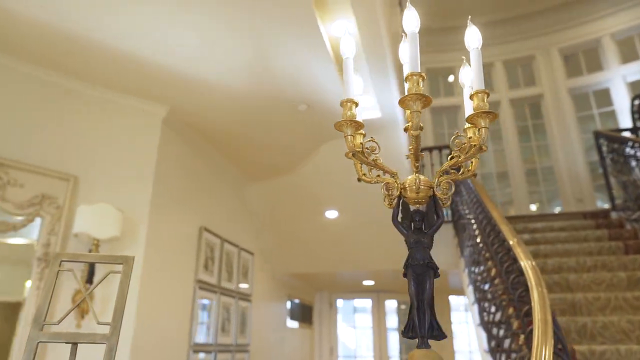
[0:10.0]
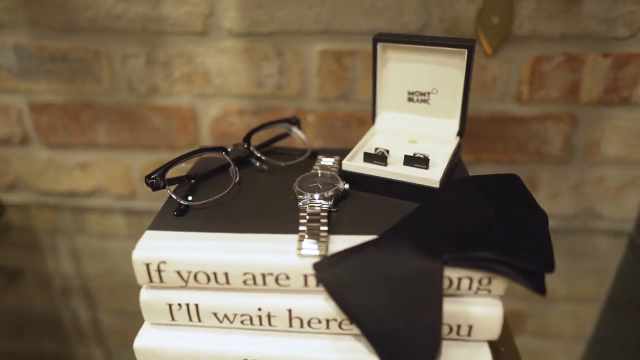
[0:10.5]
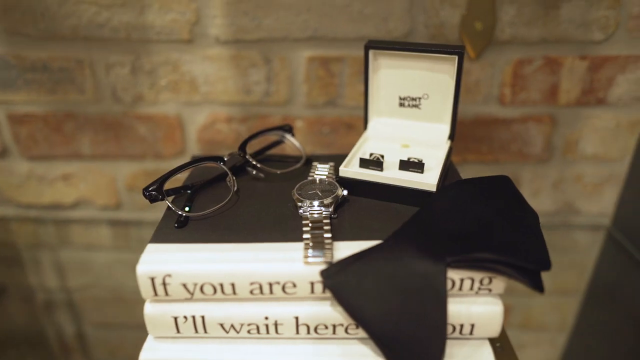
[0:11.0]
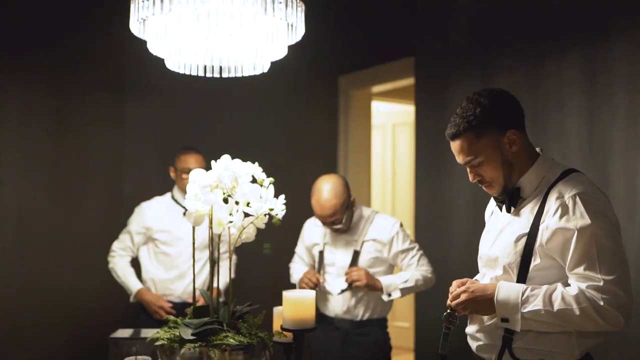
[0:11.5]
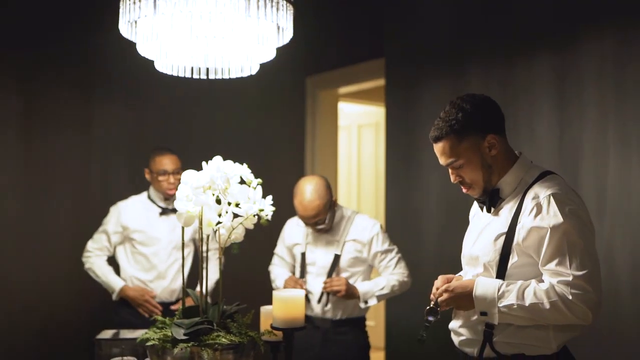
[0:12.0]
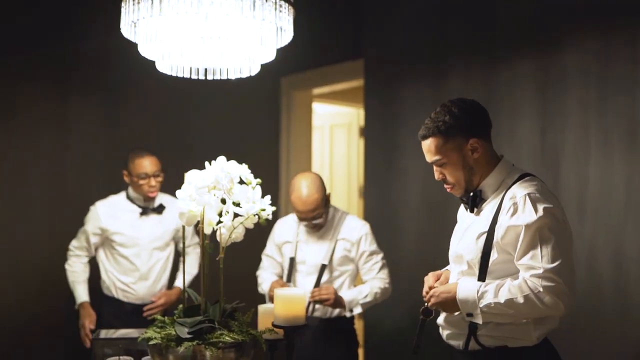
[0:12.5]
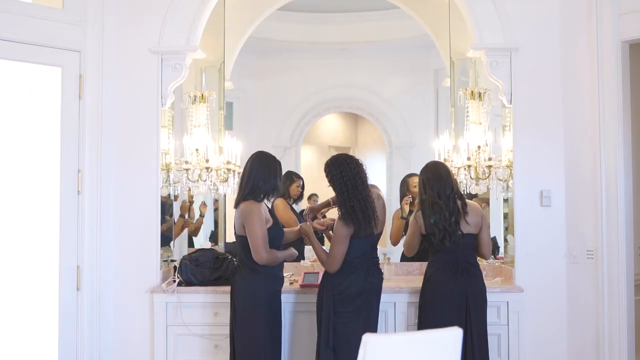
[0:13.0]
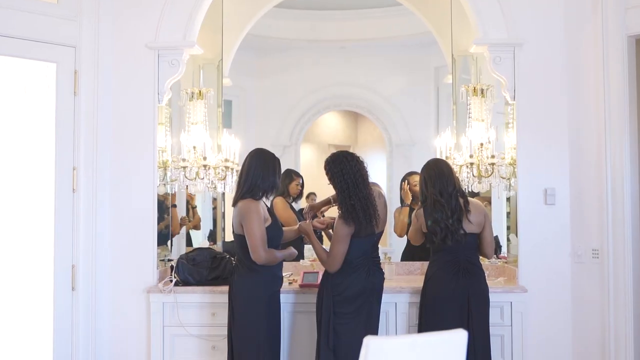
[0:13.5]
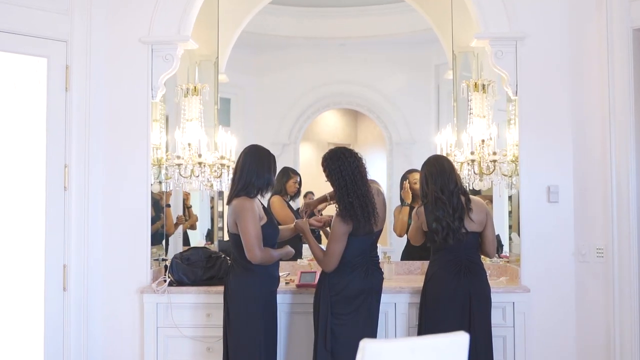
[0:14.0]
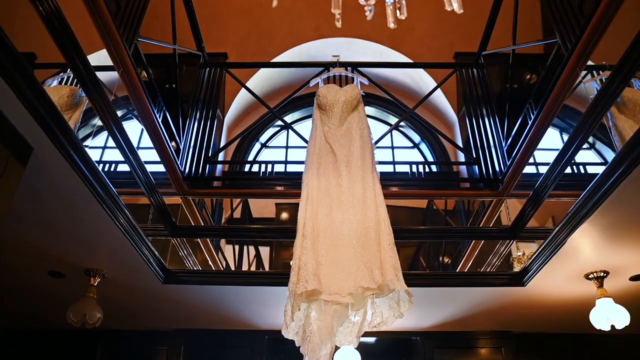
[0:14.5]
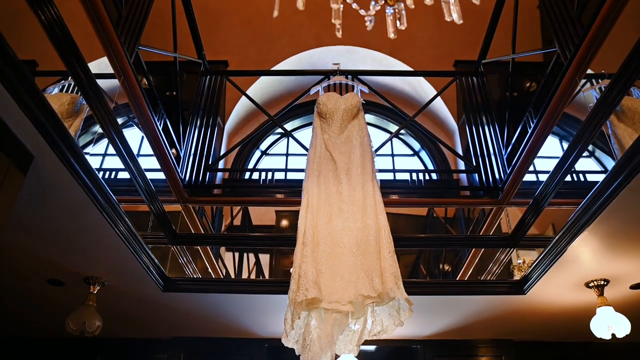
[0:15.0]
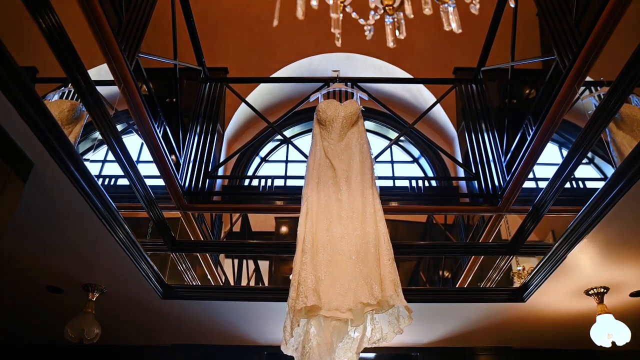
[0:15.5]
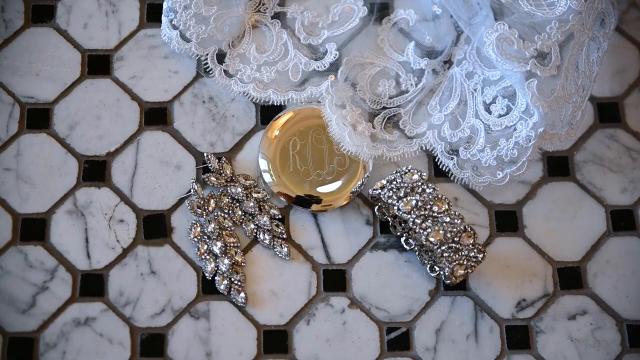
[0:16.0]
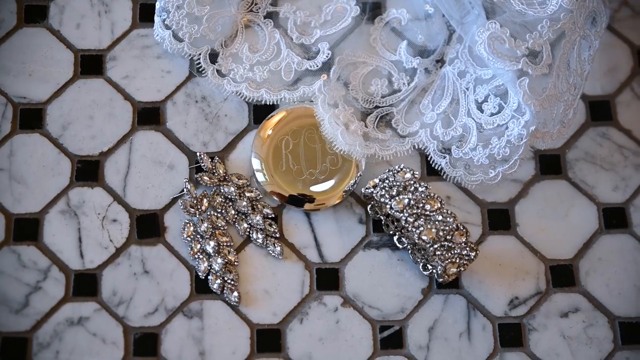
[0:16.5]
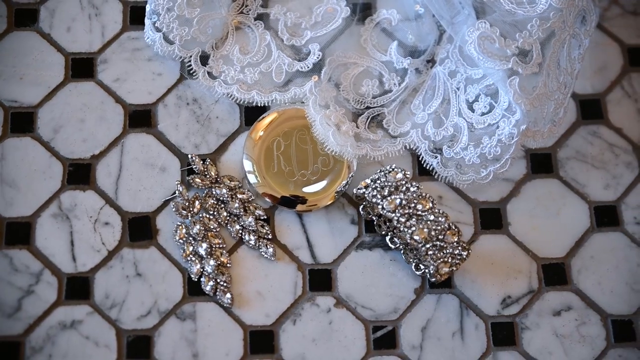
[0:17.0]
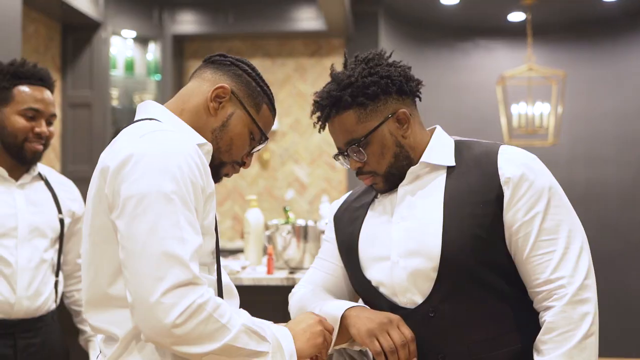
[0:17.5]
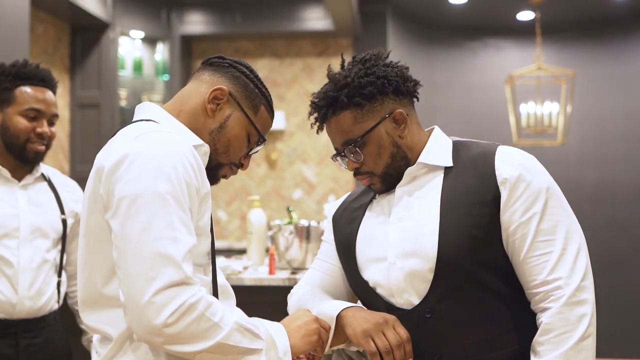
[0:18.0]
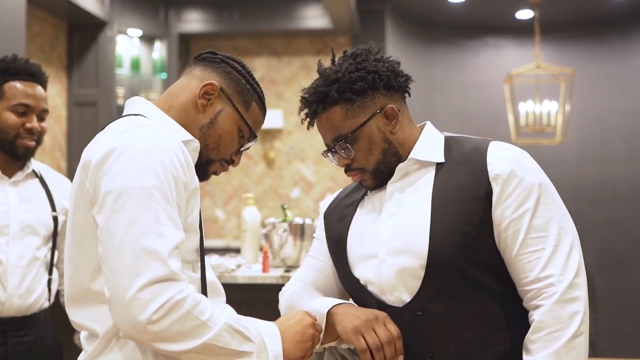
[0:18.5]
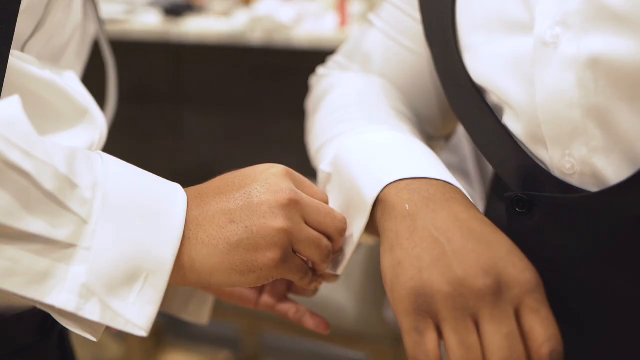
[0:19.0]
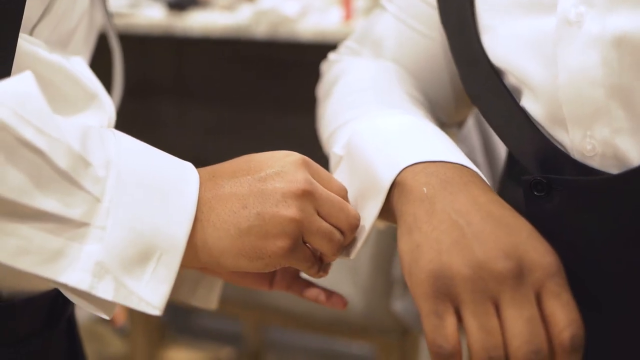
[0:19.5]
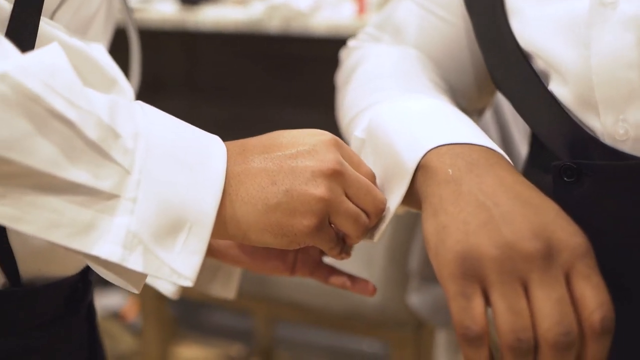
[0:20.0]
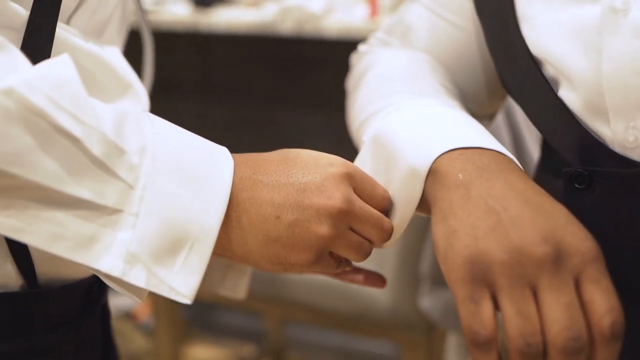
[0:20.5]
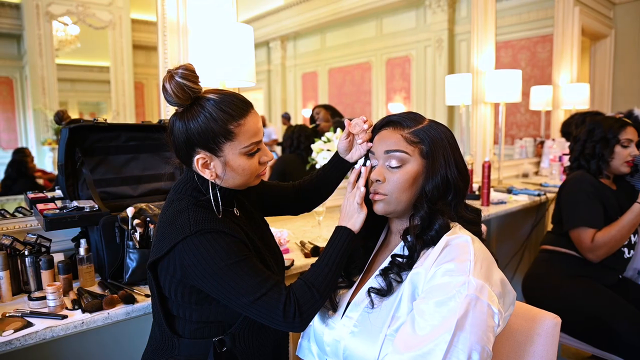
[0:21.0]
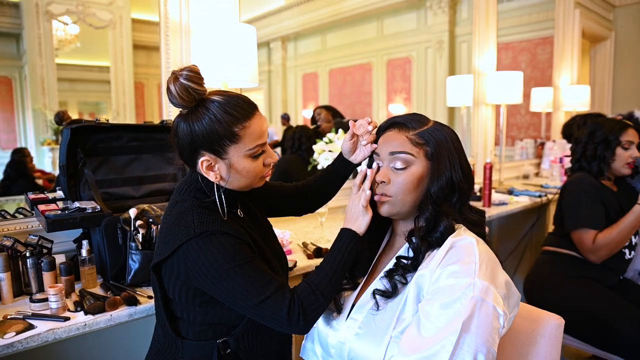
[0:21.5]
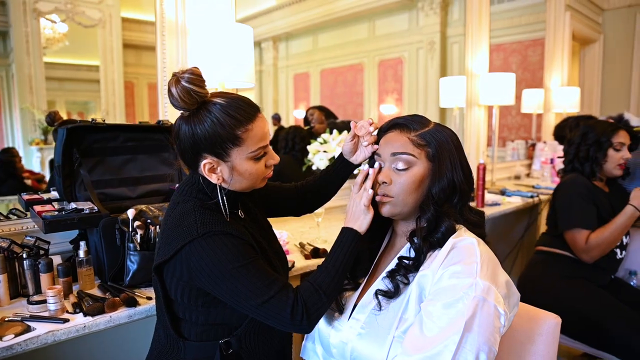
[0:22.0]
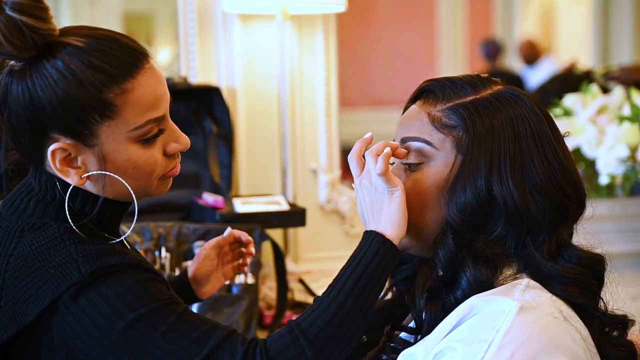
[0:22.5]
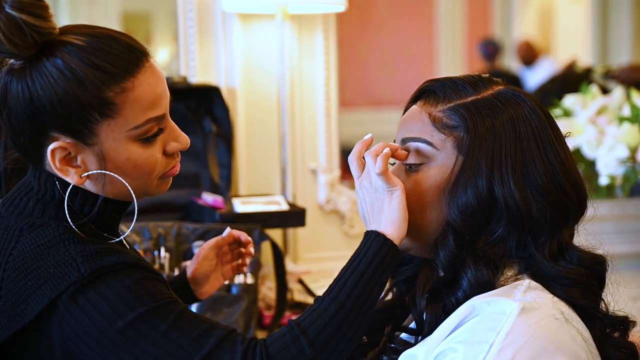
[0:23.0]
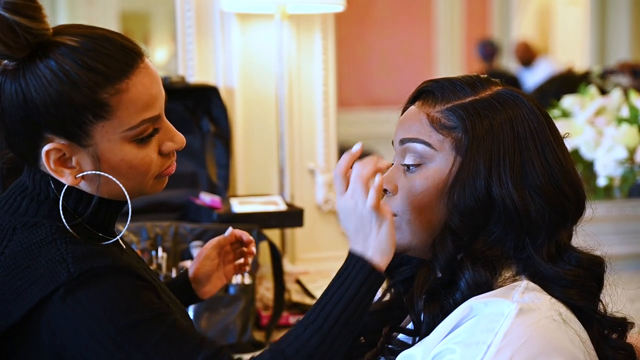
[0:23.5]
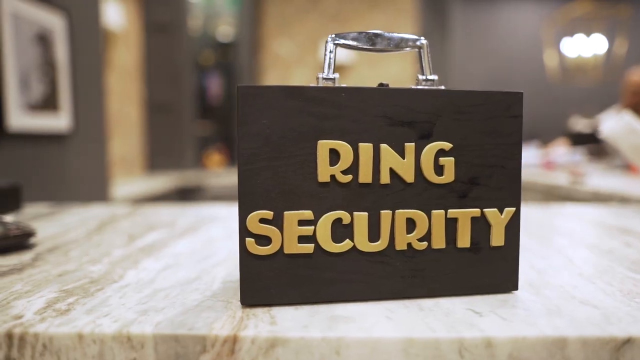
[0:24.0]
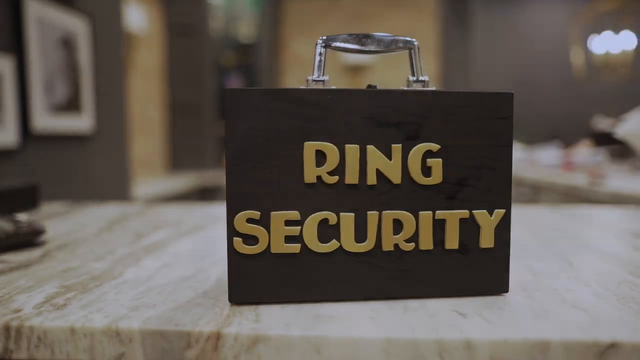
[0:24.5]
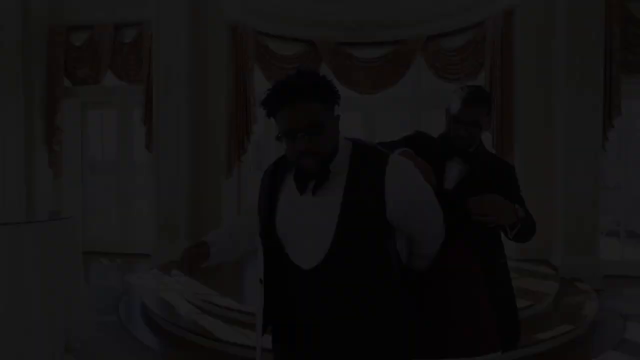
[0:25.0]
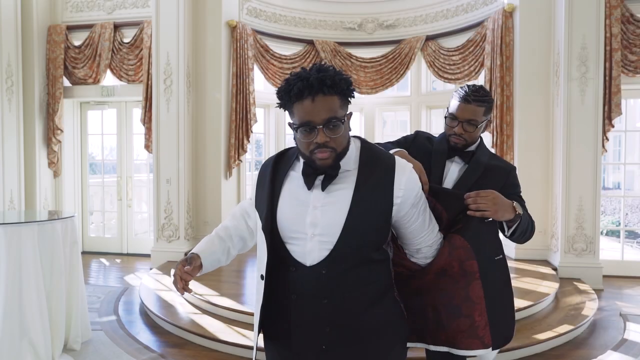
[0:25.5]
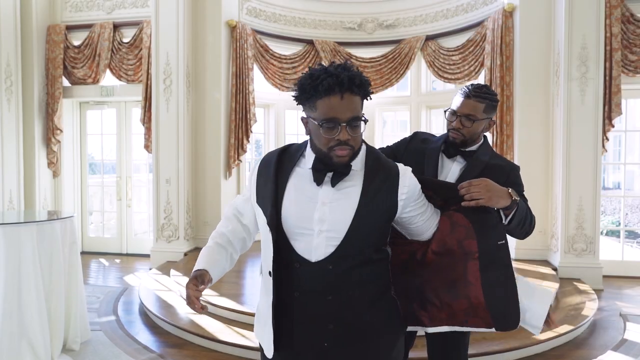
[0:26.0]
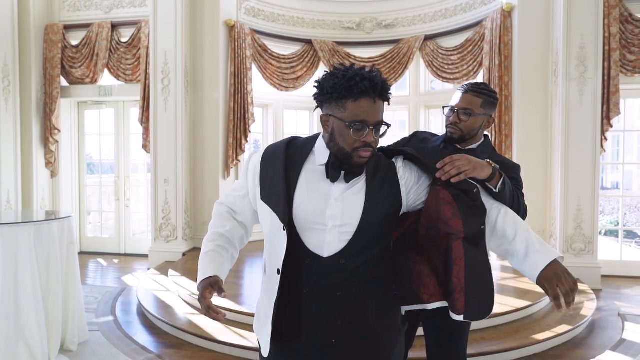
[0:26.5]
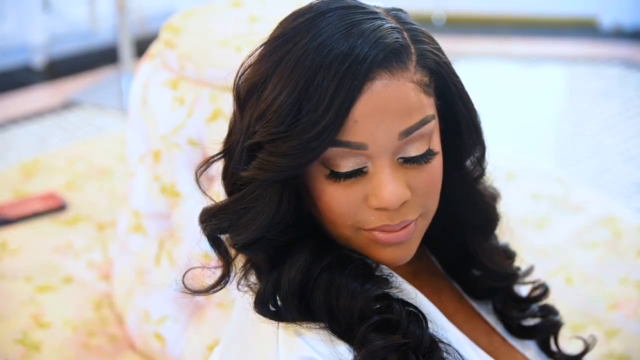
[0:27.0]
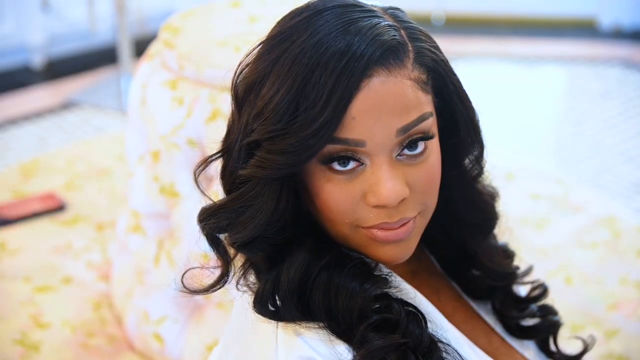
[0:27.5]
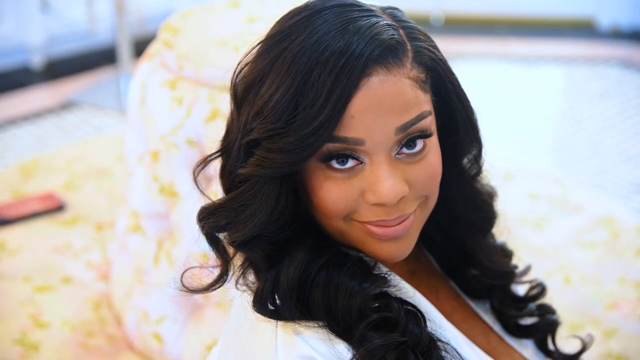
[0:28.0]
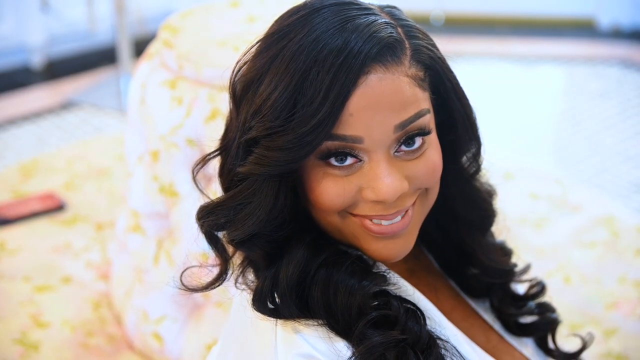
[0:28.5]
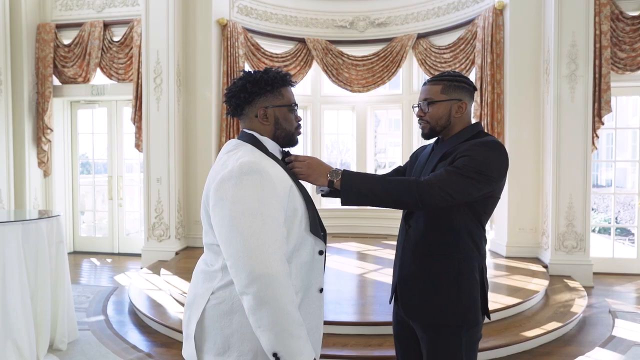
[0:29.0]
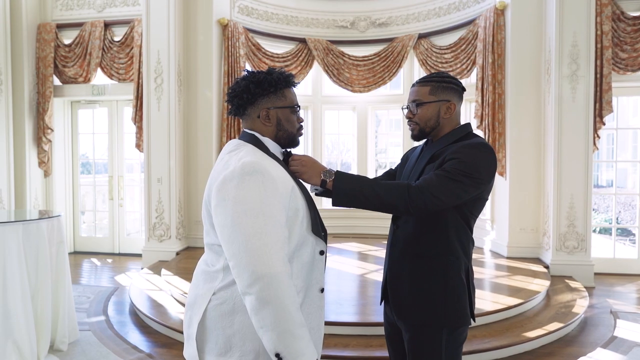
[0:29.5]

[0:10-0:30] What looks like a stack of black books carries writing that begins "If you are" and, after a part that cannot be seen, reads "I'll wait here for you", apparently words from the groom. The items the groom needs for his wedding day are laid out: a pair of glasses, a jewelry box with a pair of cufflinks in it, a silver watch and a black bow tie. Three men in dress shirts and black bow ties, the best men or groomsmen, are in a dressing room, looking very smart. Three ladies, probably the bridesmaids, with long black hair and long black dresses, look at themselves in a large mirror, probably also in a dressing room. The bride's wedding dress hangs up on a hanger; it is a long dress with a strapless bodice. The bride's items follow: her garter, earrings and a bracelet, with a round gold item in the centre that looks like a little compact, possibly some sort of necklace. One of the groomsmen helps the groom put his cufflinks on, and he stands there in a black waistcoat. A makeup artist does the bride's makeup. Finally there is a box that looks like a lock box with "ring security" written on it.